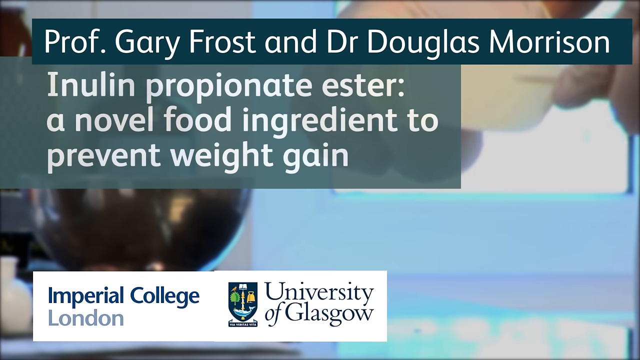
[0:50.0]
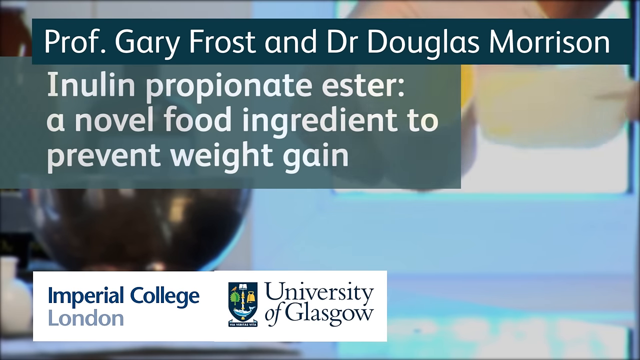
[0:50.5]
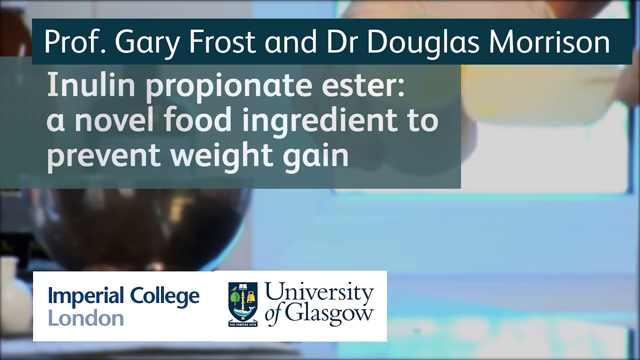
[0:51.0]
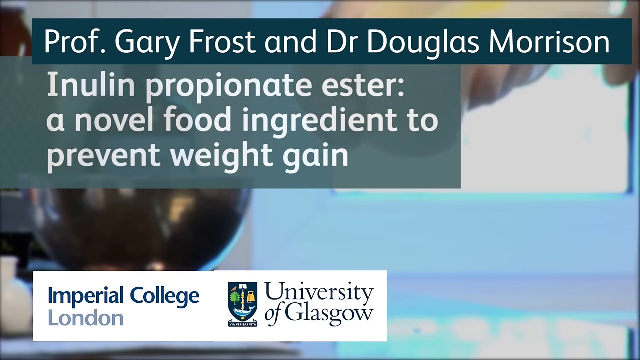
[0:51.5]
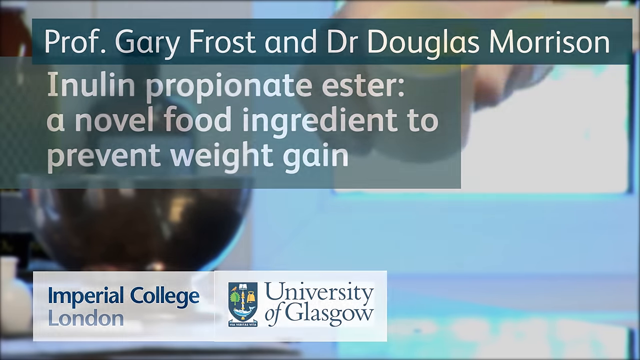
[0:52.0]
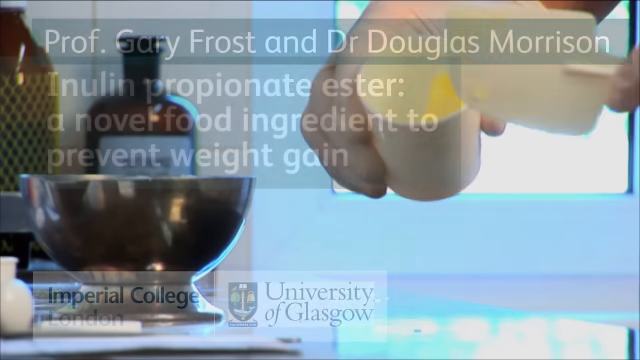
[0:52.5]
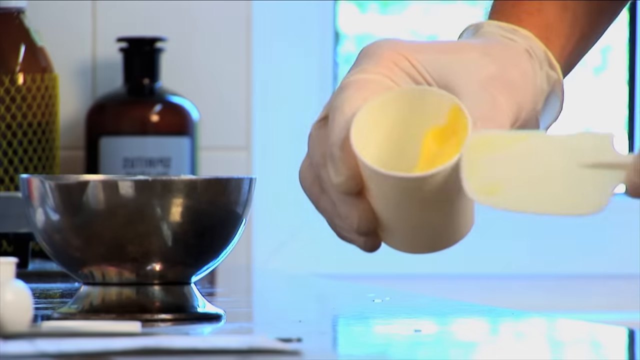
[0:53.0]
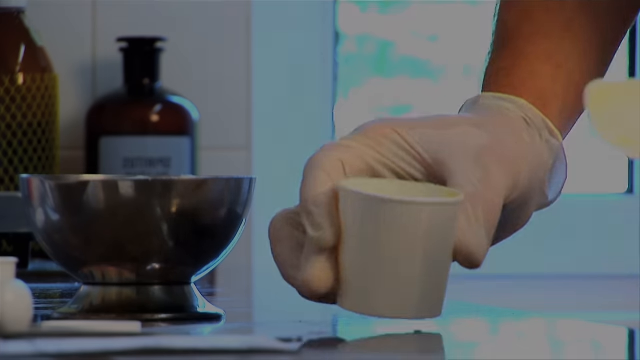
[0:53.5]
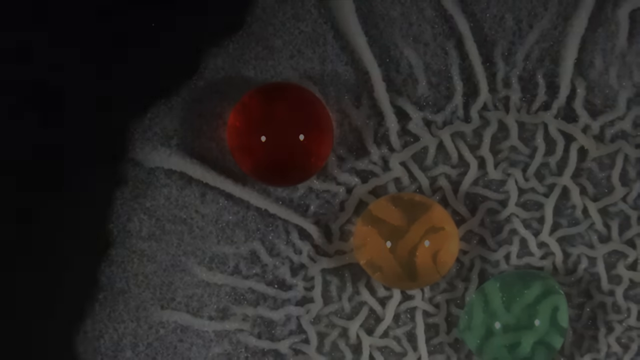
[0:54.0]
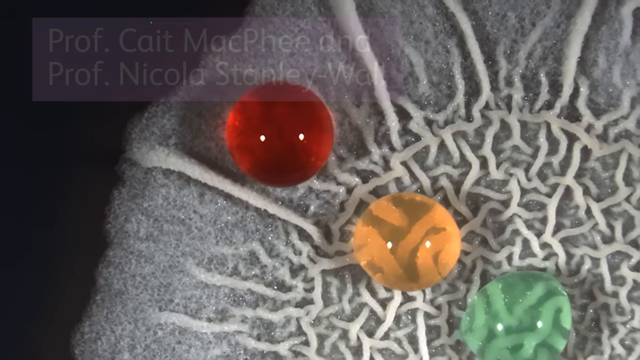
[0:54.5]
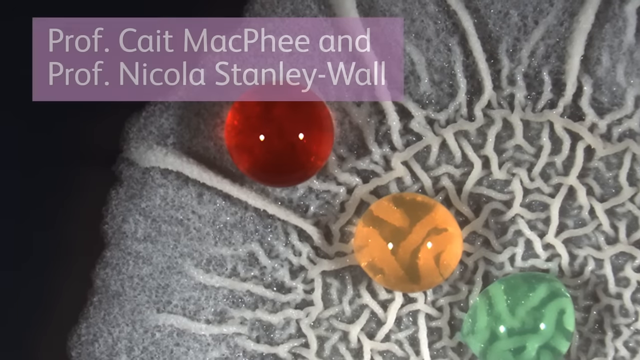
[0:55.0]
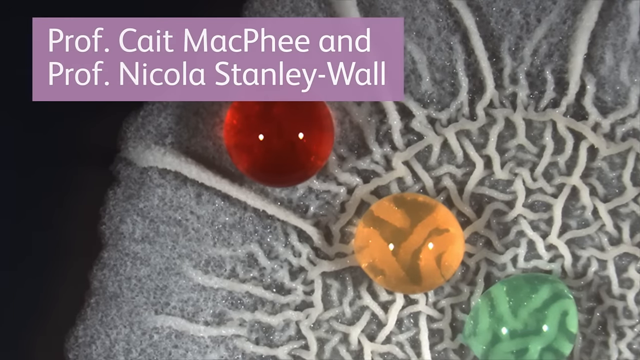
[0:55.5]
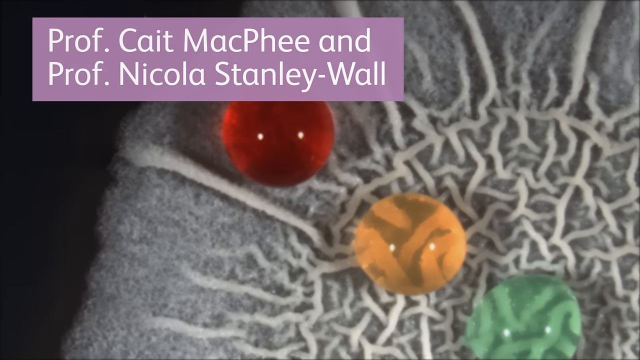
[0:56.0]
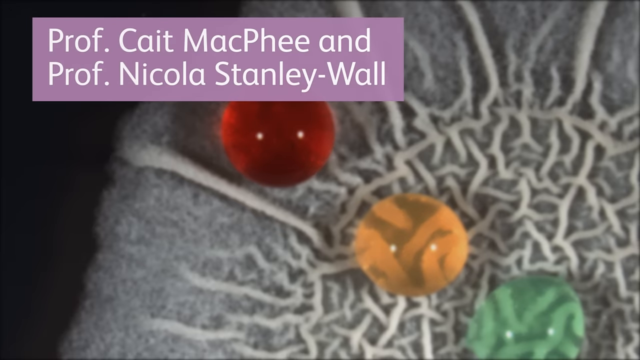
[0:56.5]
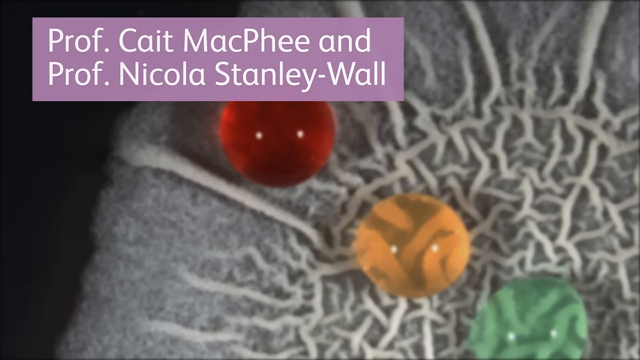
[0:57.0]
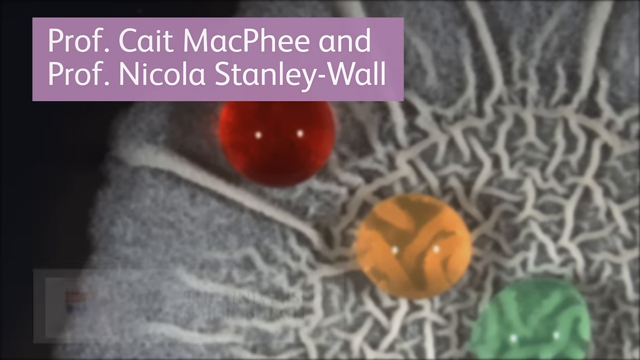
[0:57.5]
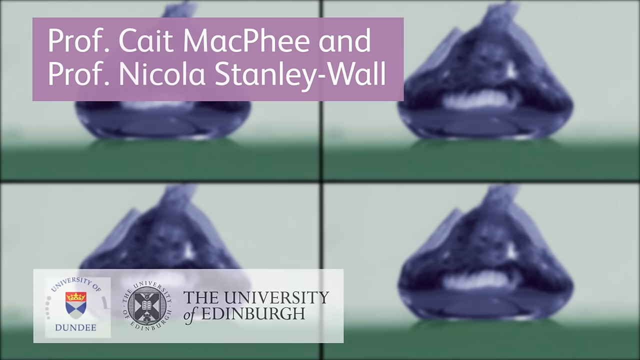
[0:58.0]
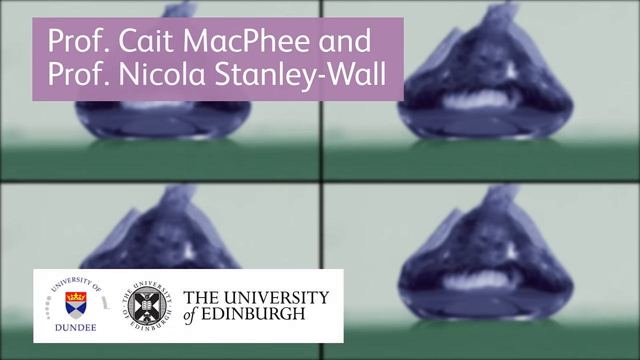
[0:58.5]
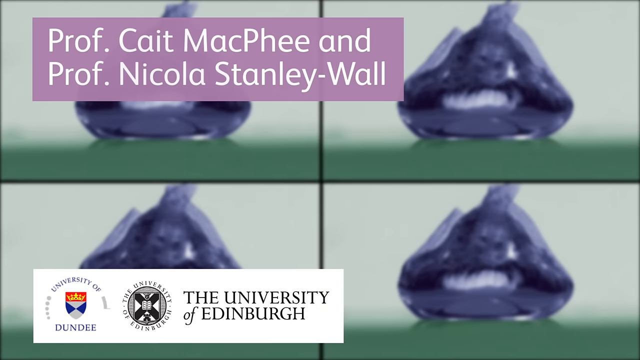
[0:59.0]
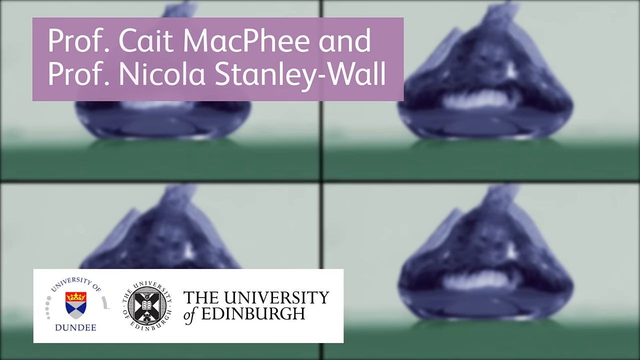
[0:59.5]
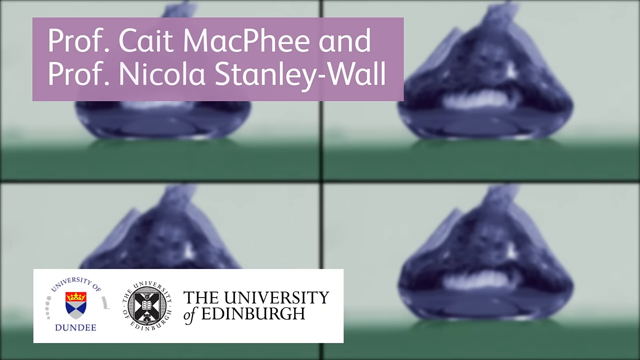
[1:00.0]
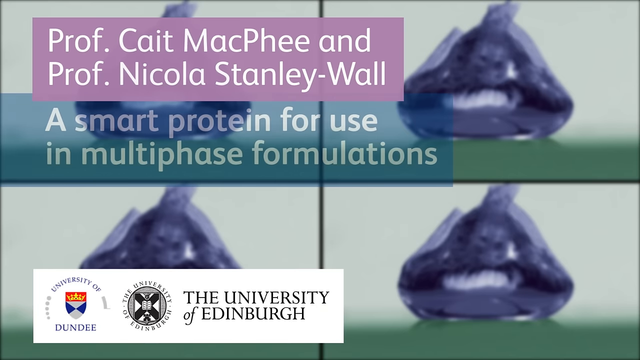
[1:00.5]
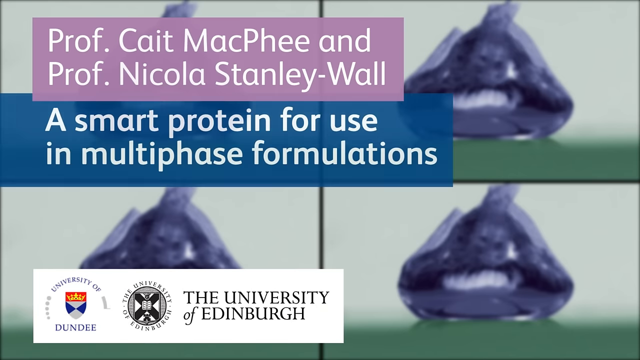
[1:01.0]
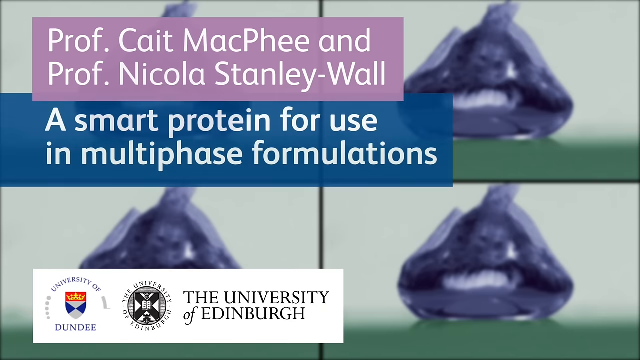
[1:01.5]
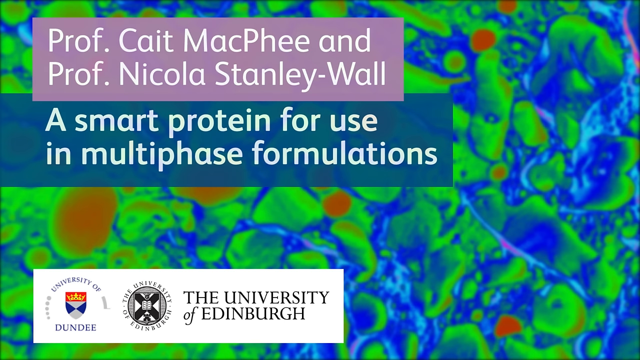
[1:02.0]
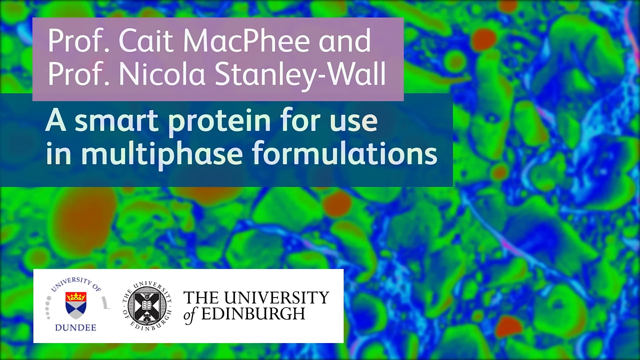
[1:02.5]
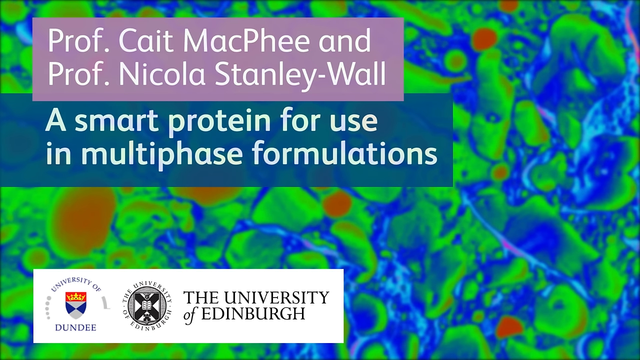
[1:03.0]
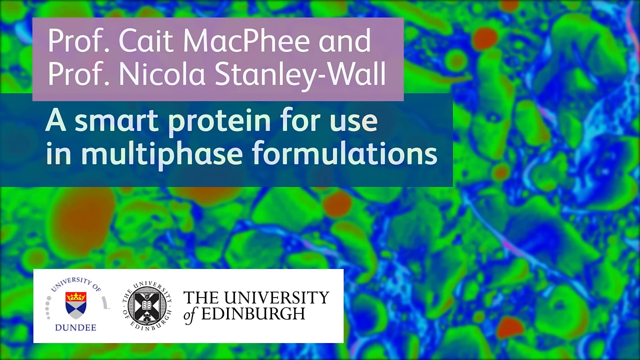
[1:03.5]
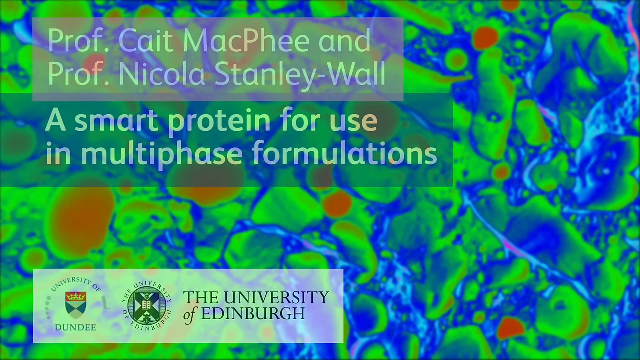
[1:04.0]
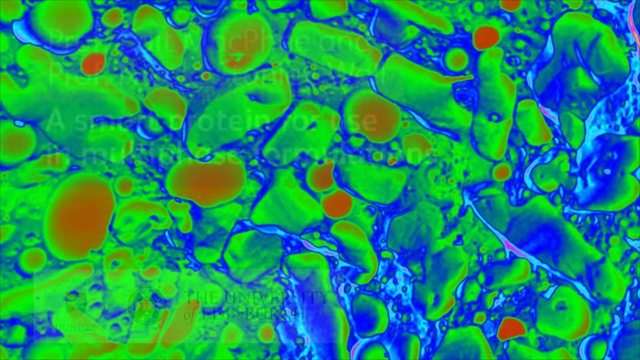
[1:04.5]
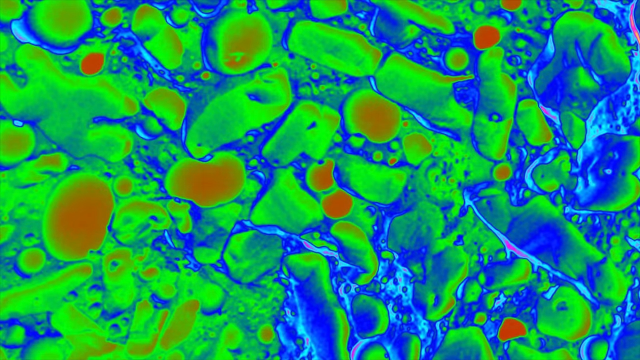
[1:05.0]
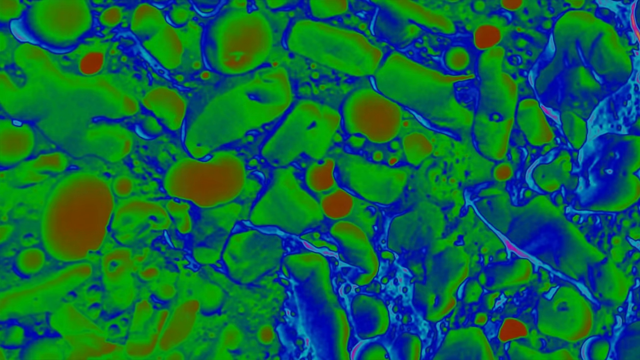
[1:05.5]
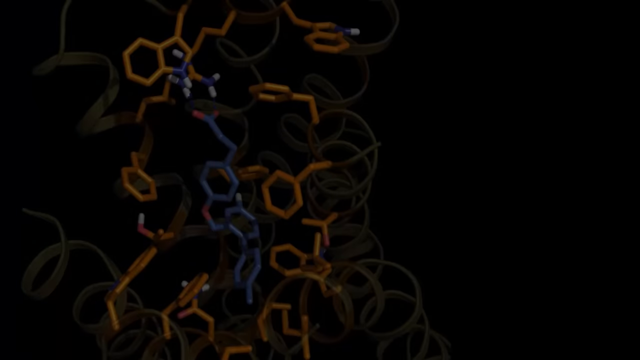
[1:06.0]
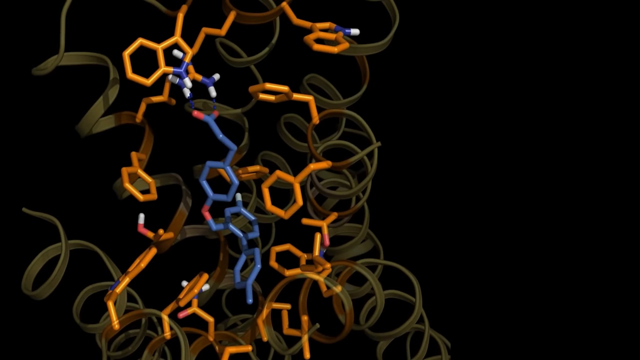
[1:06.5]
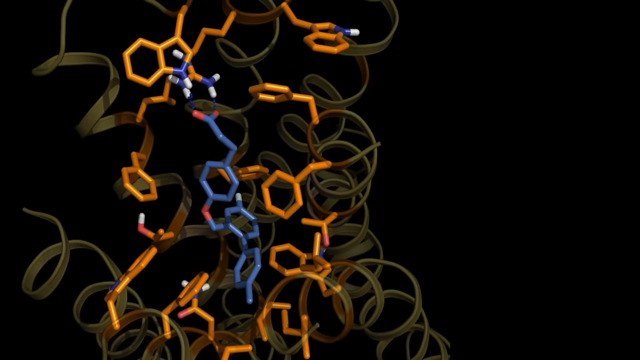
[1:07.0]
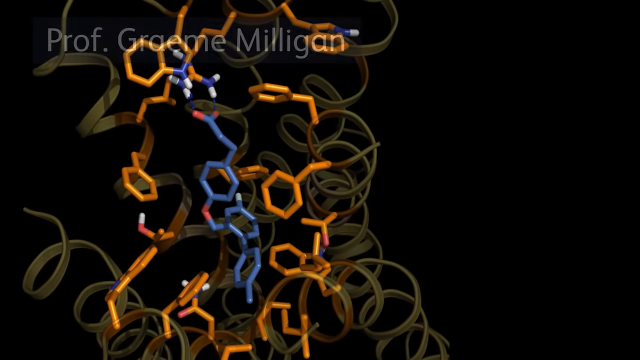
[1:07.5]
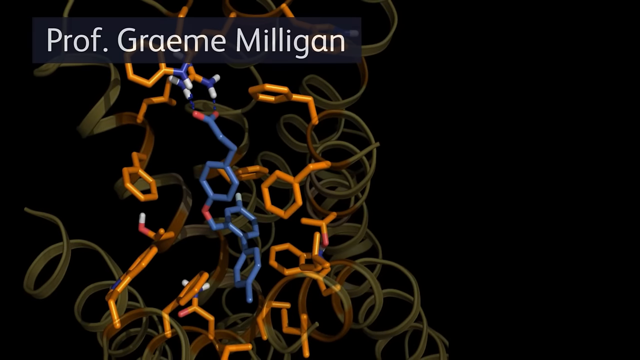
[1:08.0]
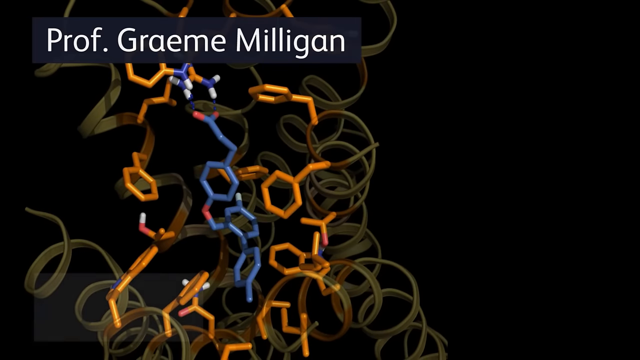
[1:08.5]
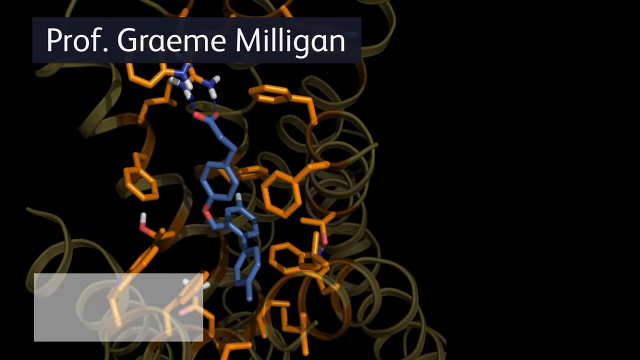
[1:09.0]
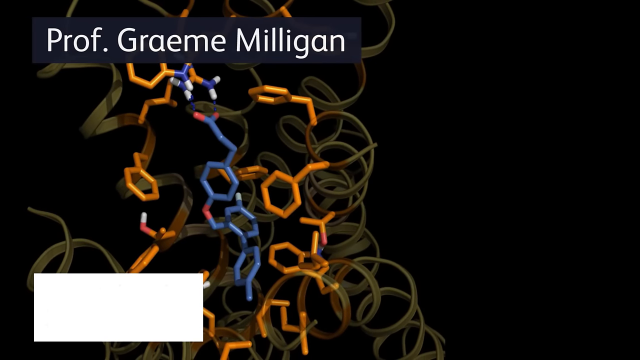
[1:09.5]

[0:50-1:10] Someone holds a small white cup in their right hand and something that looks like a cake icing spreader in their left hand, putting a substance into the cup. Text at the top reads "Professor Gary Frost and Dr. Douglas Morrison", and below it "INULIN propionate ester, a novel food ingredient to prevent weight gain". The scene switches to a screen with a purple banner at the top reading "Professor Kate McPhee and Professor Nicola Stanley-Wall". On screen is something sort of round that looks like the top of a flower, except it is white and gray, with three objects that look like translucent marbles arranged diagonally: a red one at the top left, a yellow-orange one below it, and a green one below that. The camera slowly zooms in. It then switches to four images of what looks like toothpaste squeezed into a drop from the tube, two at the top and two on the right. At the top left, text reads "Professor Kate McPhee and Professor Nicola Stanley-Wall", and below it "a smart protein for use in multiple formulas".